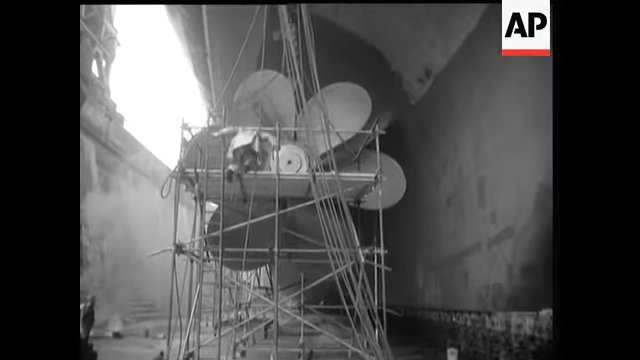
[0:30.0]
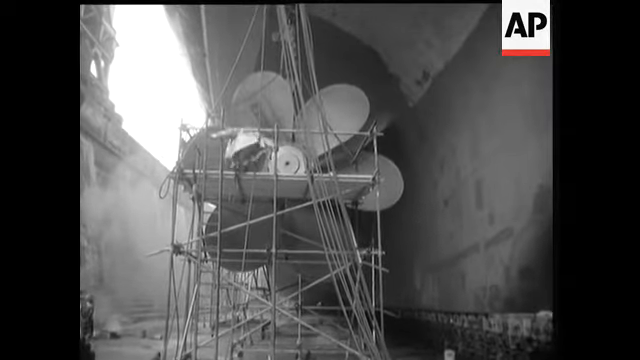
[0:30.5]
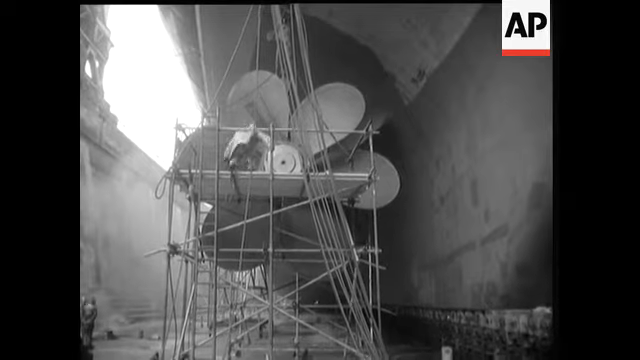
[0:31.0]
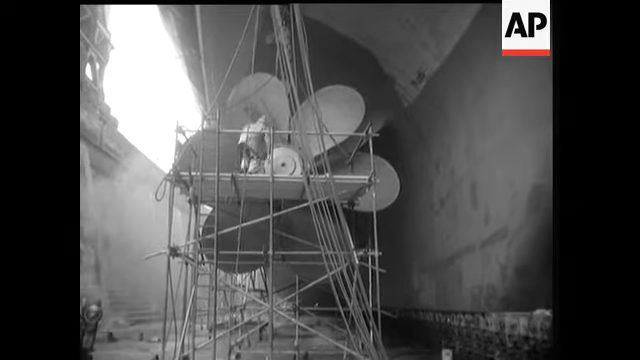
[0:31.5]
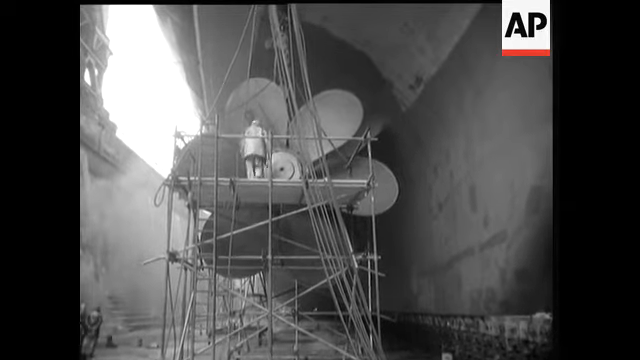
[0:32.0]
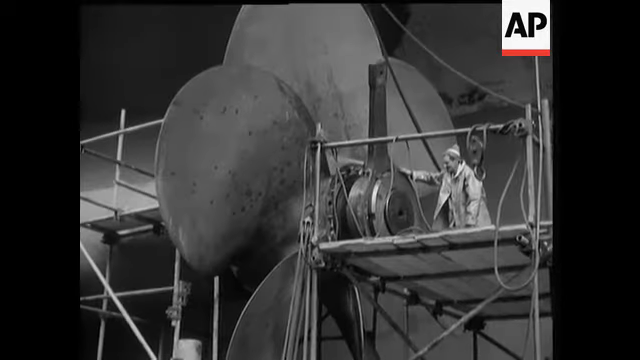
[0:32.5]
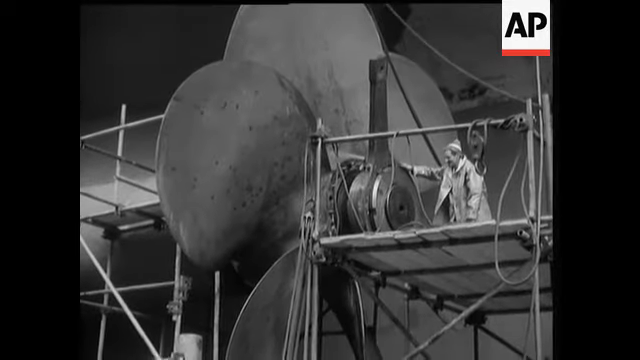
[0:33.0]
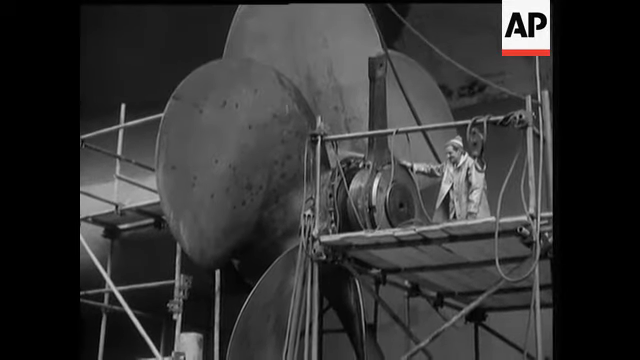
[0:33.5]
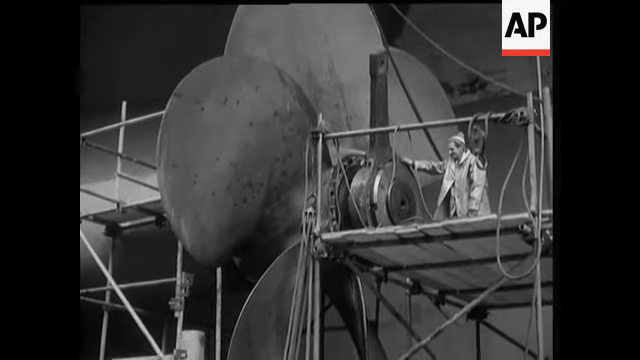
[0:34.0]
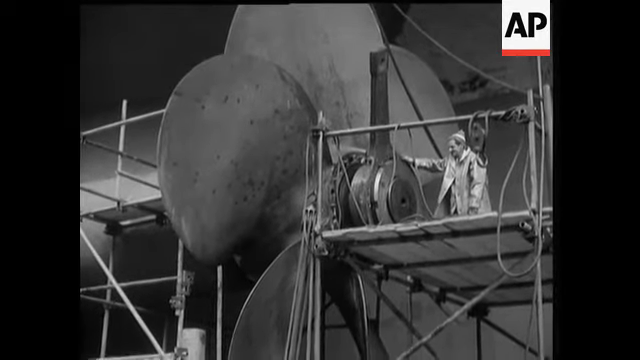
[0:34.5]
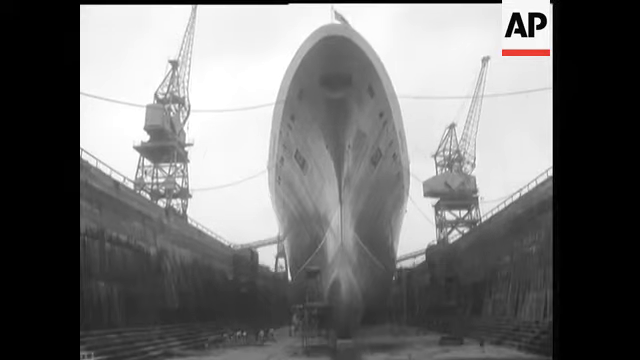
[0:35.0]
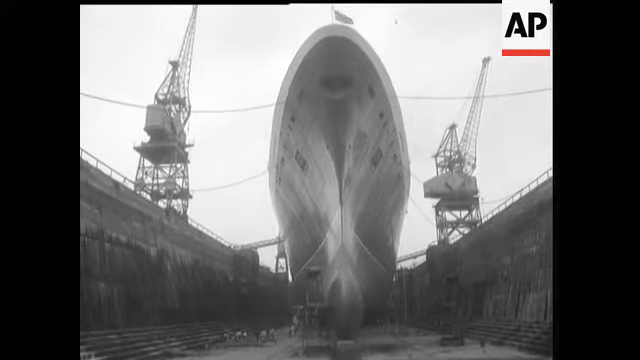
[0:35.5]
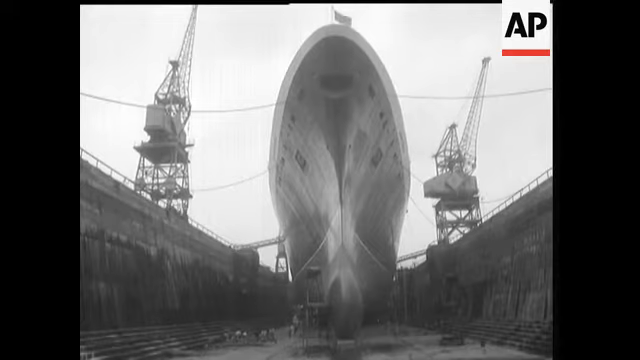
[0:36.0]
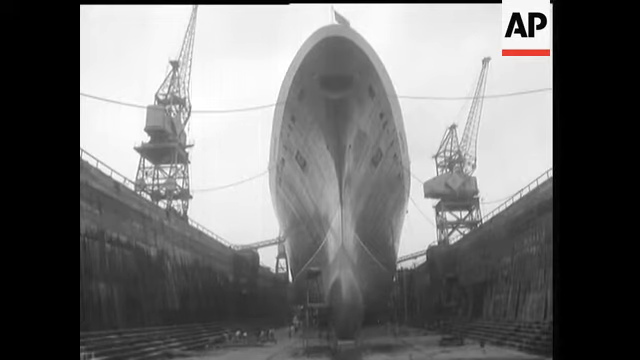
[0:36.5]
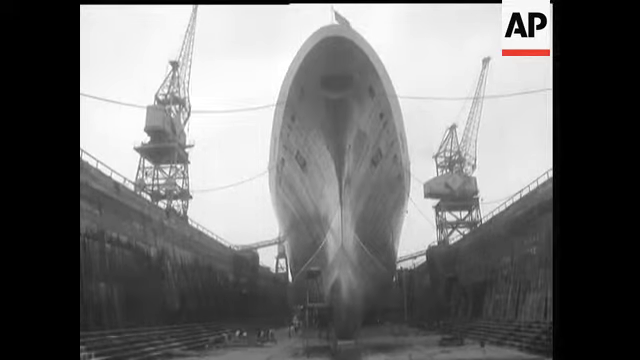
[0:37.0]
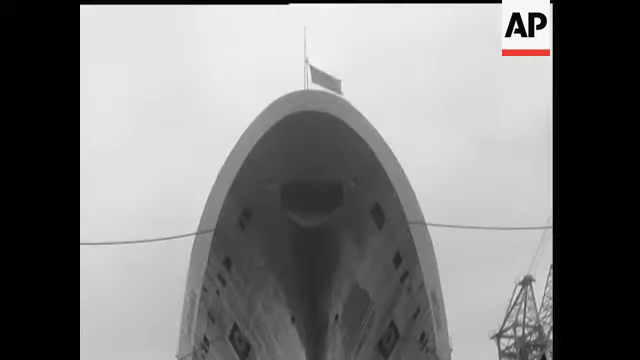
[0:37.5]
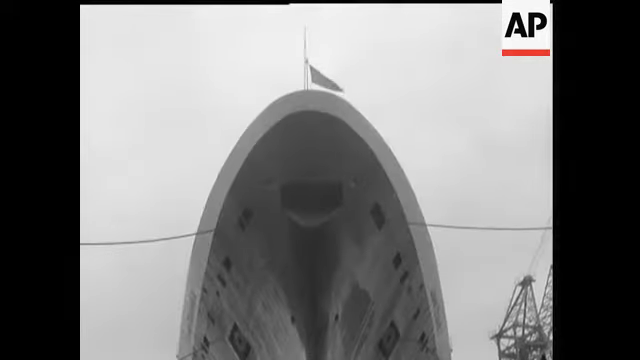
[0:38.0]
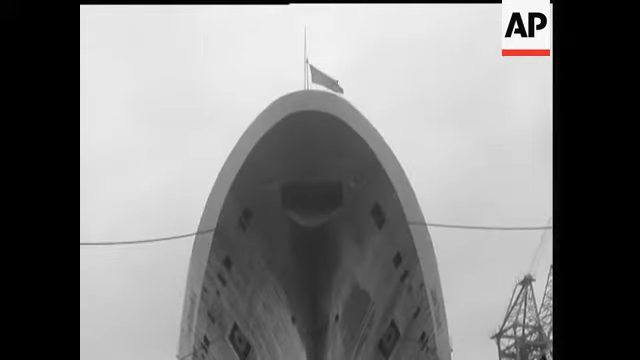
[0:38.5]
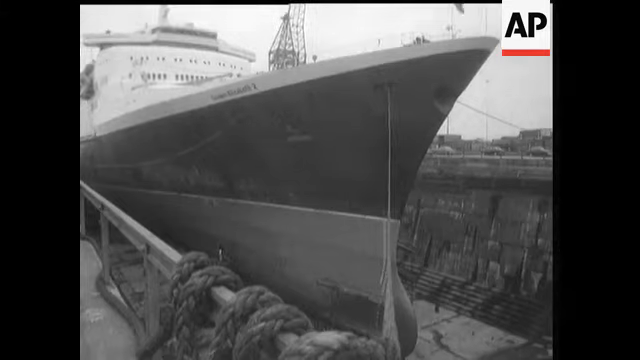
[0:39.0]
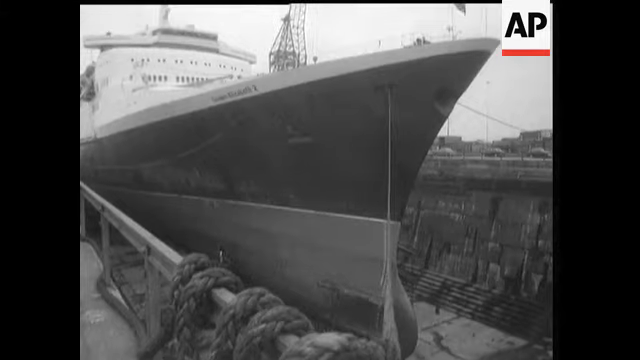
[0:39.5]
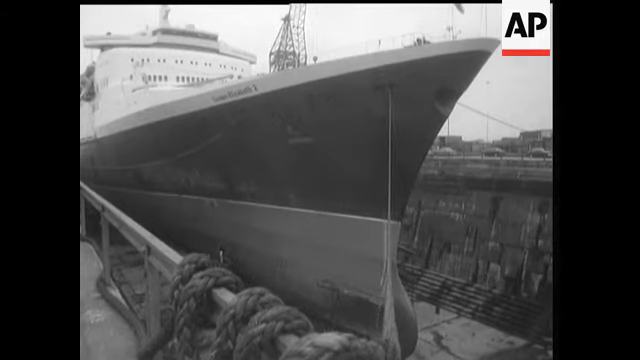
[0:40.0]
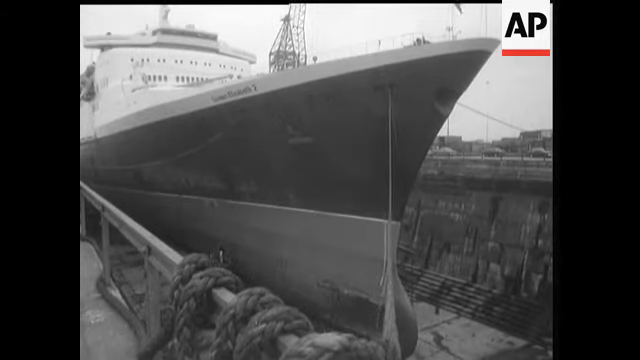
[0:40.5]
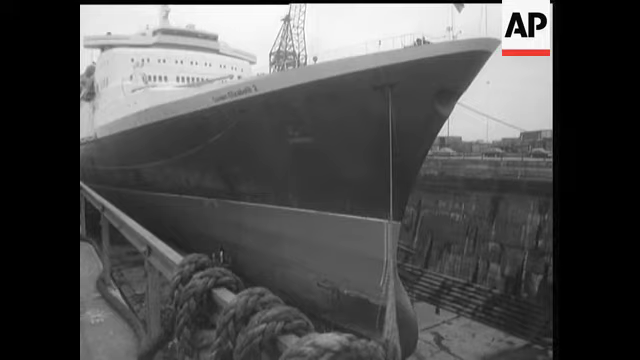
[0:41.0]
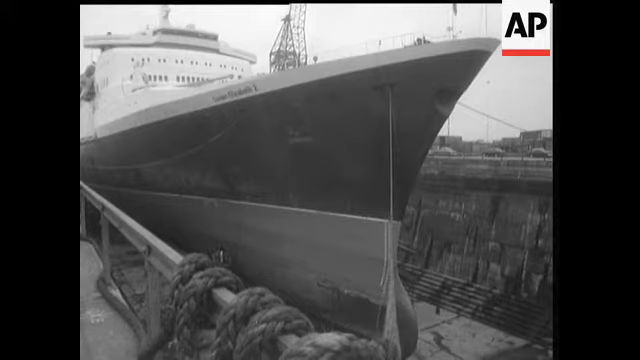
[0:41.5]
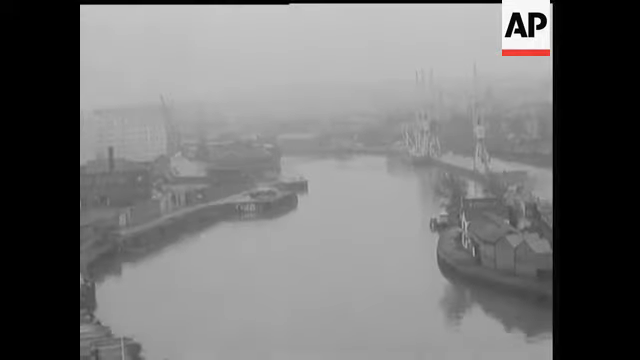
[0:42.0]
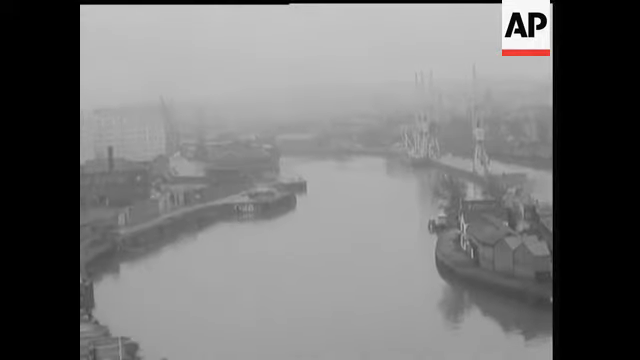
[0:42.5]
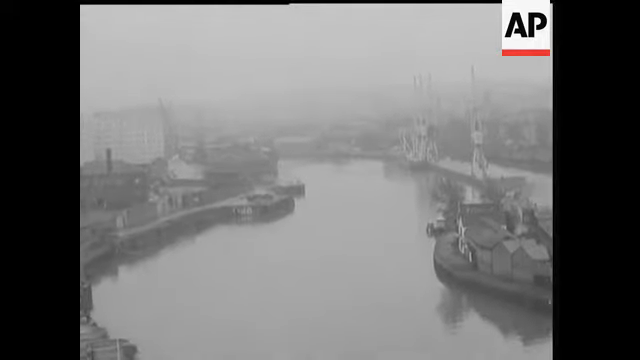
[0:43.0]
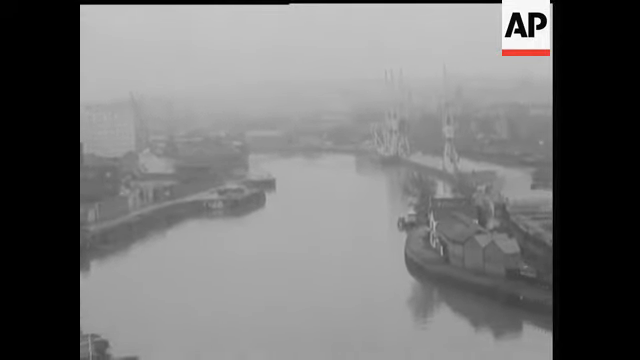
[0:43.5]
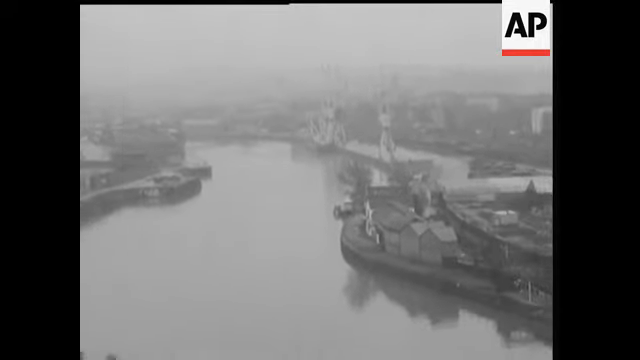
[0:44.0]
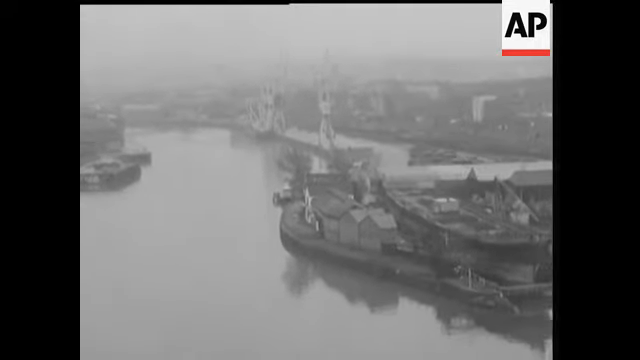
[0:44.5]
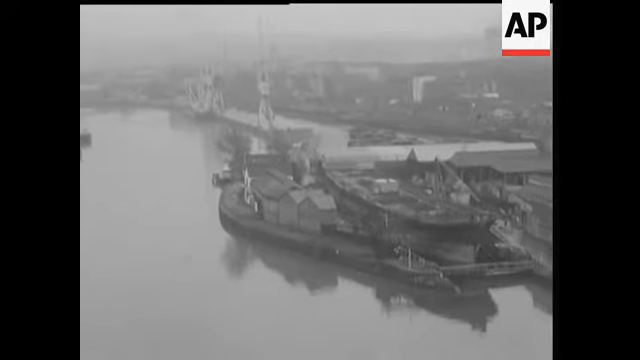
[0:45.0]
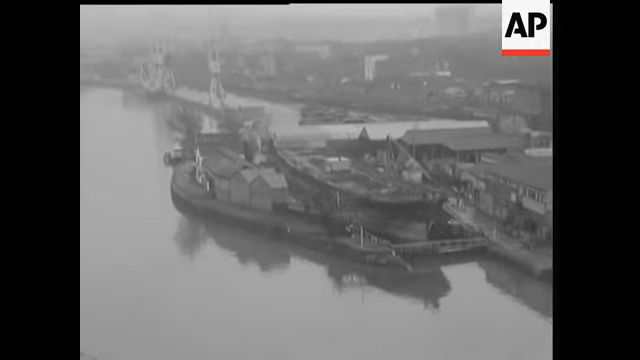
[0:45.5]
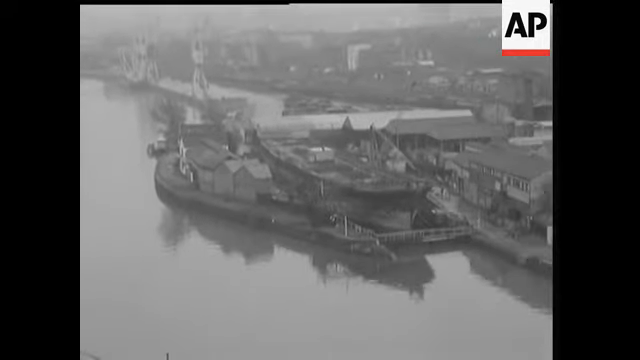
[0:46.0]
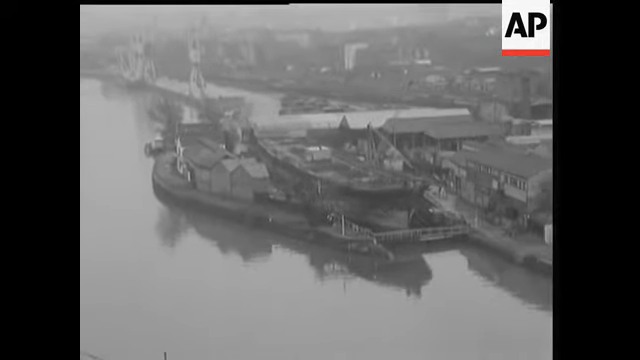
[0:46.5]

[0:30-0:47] At the rear of the ship, a scaffolding-type construction surrounds the propeller. The scaffolding is four poles wide, and only its top three stories, with boards on them, are visible. A man kneels on a board at the top and looks quite small next to the giant propeller. The view then moves to the front of the ship, looking out over the port; the ship itself is not seen, but there is a view across to another dock, perhaps where another ship is being built. The footage is in black and white, and the area looks like a tidal estuary.